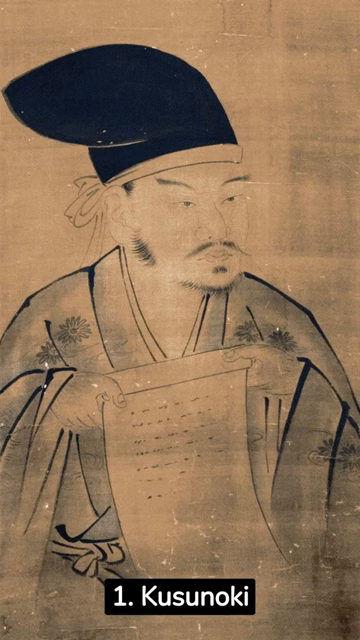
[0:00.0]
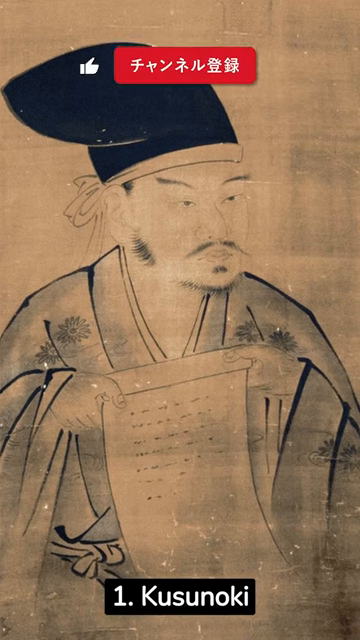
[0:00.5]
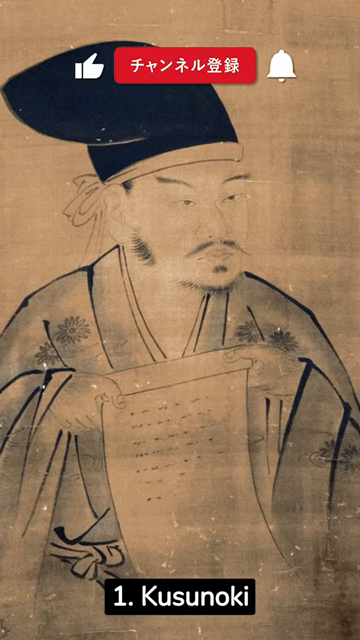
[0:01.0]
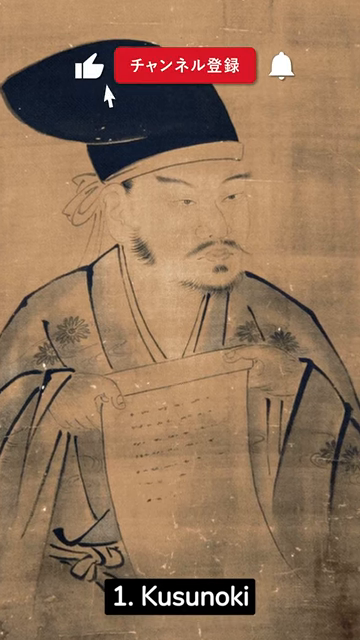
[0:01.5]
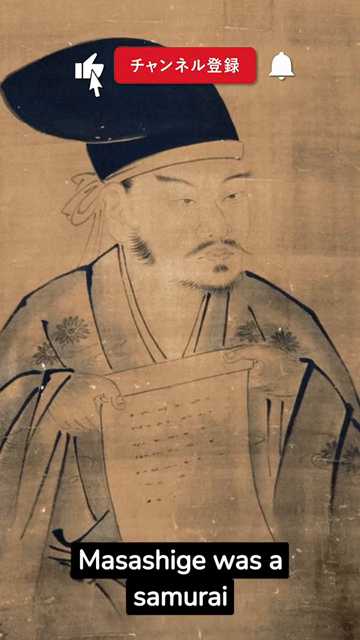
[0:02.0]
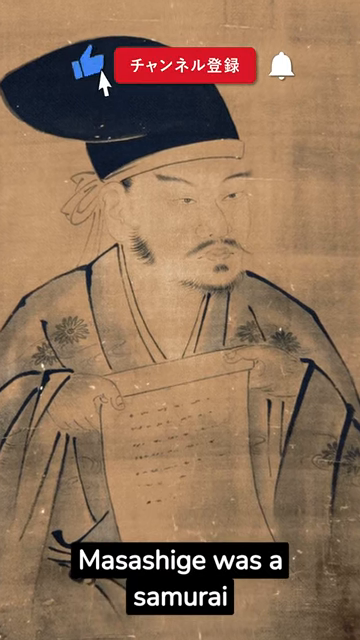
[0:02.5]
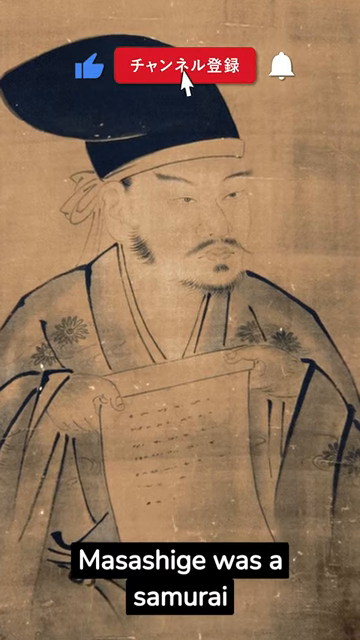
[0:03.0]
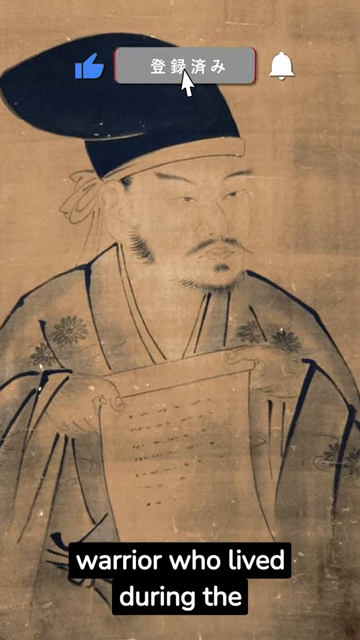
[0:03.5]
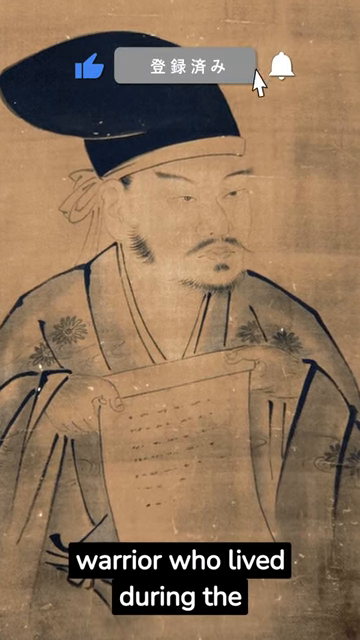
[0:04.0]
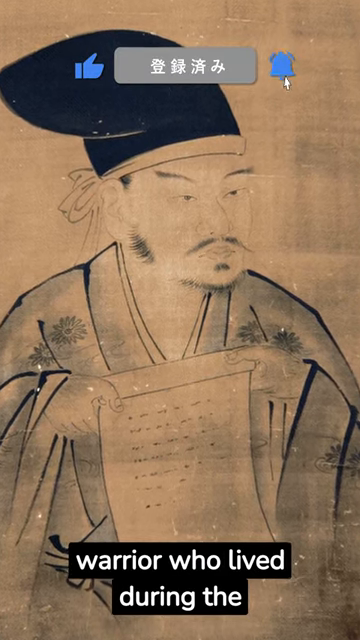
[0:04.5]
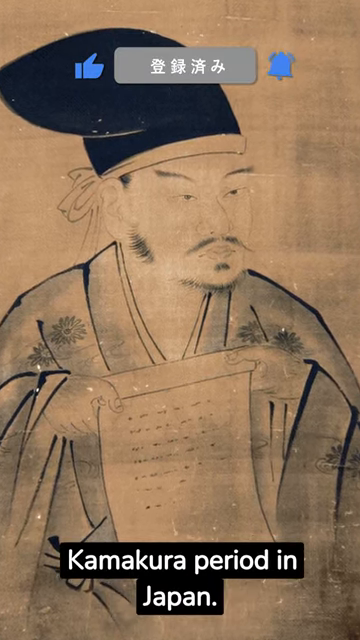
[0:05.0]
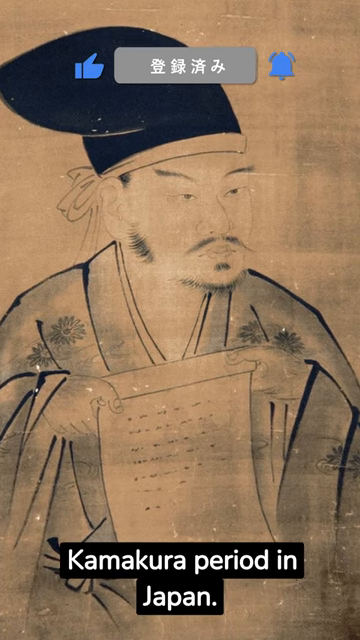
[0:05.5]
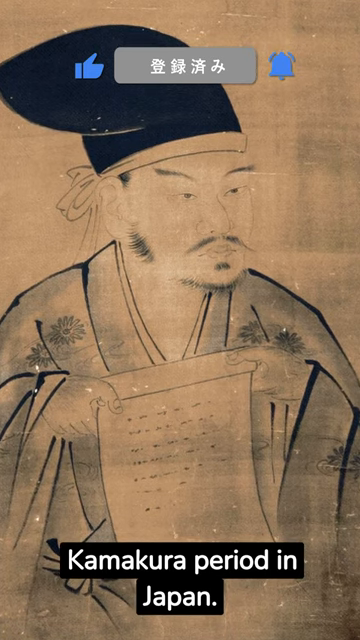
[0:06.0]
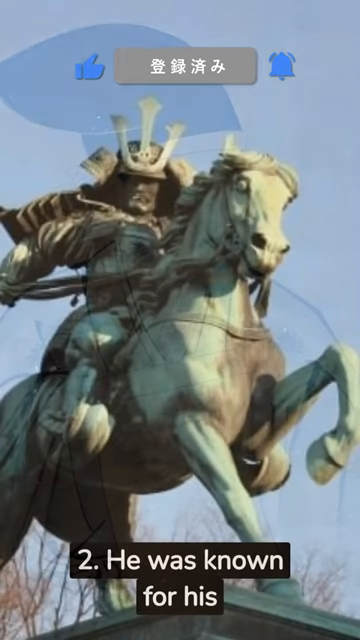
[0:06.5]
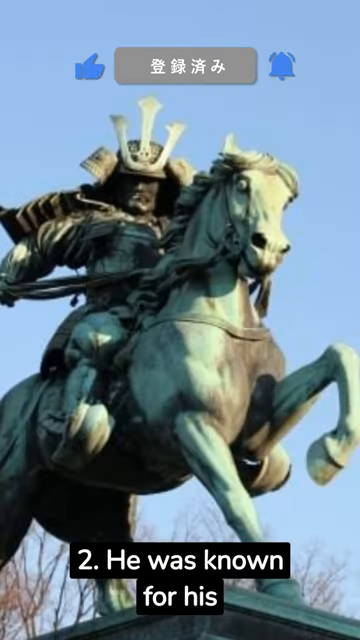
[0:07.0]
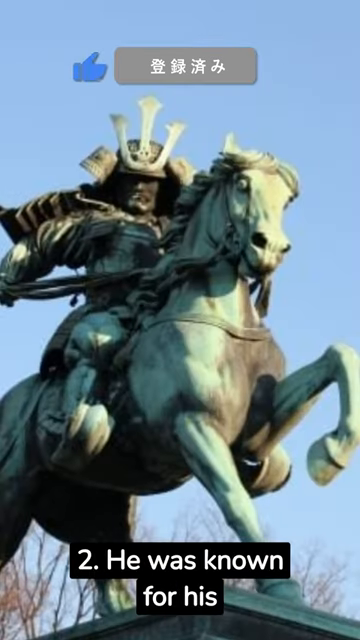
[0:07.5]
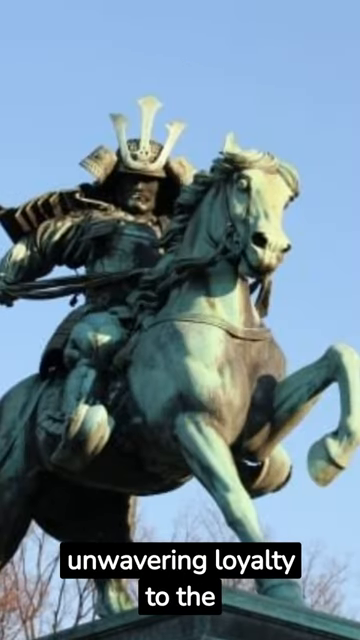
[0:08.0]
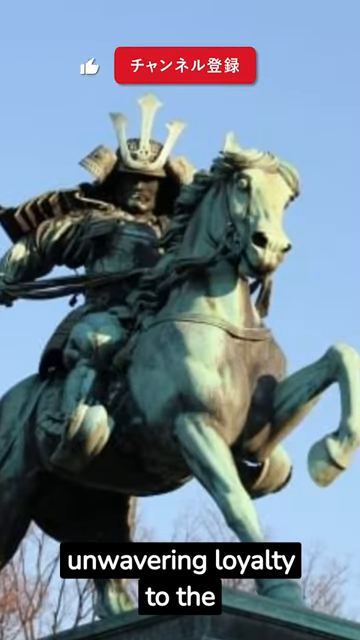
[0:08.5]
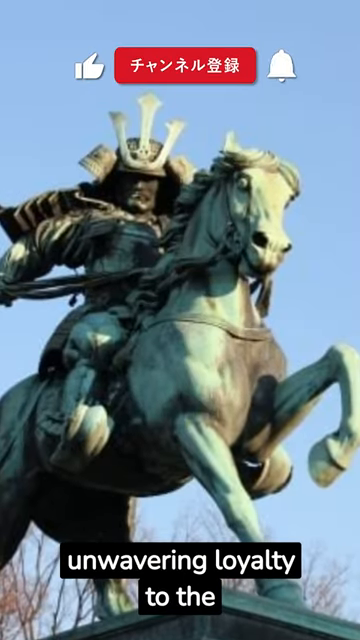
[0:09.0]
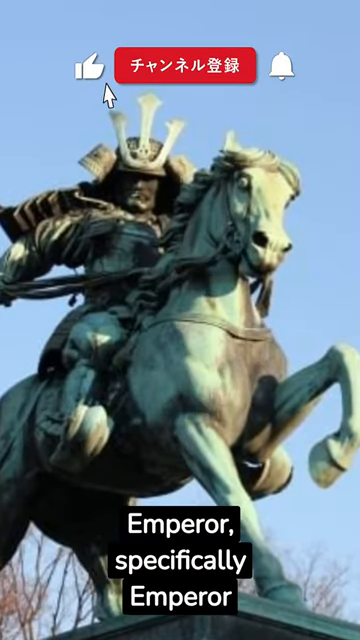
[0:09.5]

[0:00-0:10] The video opens on a portrait done in a traditional Japanese style: a pencil drawing of a man holding a scroll in front of him. He wears a robe with floral patterns and very large sleeves, a black hat tied behind his head, and has a wispy beard and mustache. A call to action for subscribing and other YouTube prompts appears at the top. At the bottom, text reads "he was known for his" over the image, which transitions to a statue of a samurai riding a horse. The text below then reads "unwavering loyalty to the".